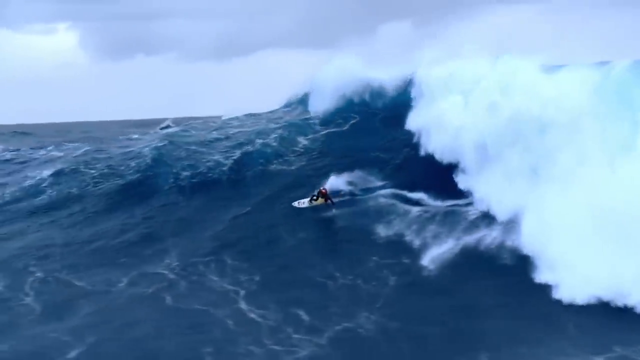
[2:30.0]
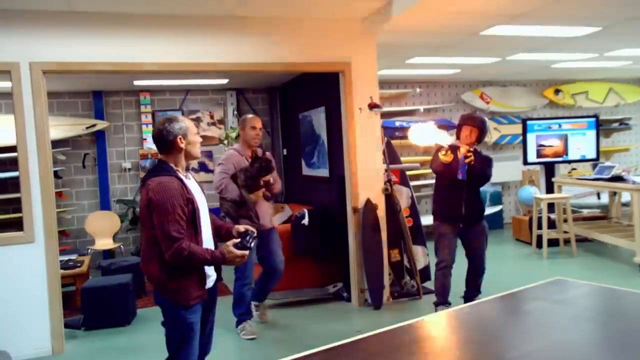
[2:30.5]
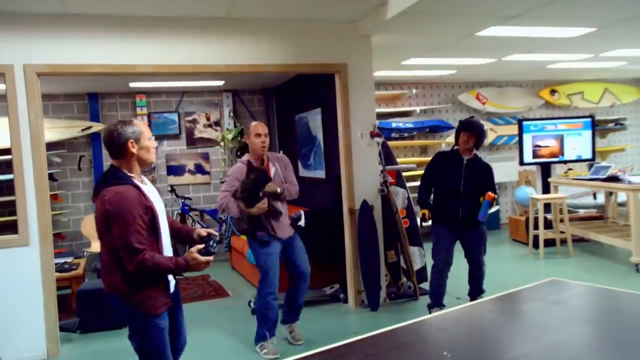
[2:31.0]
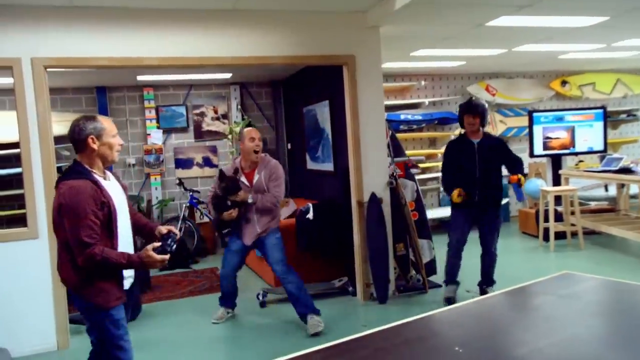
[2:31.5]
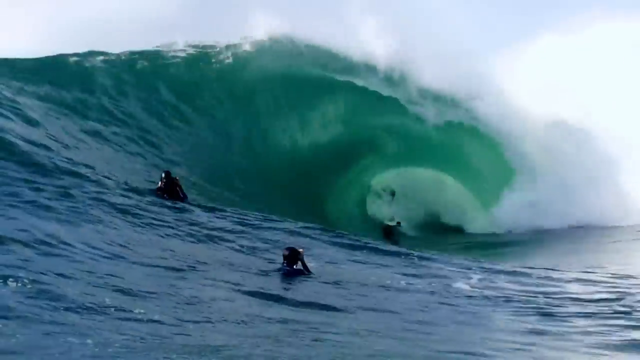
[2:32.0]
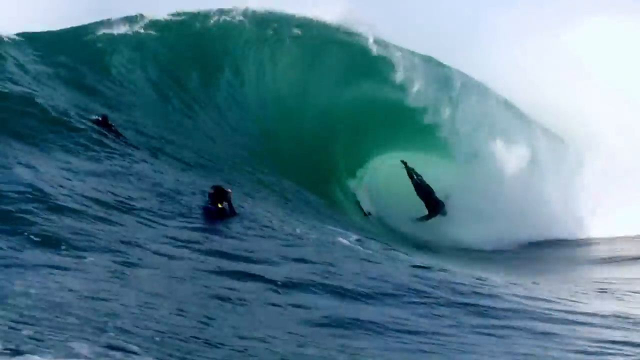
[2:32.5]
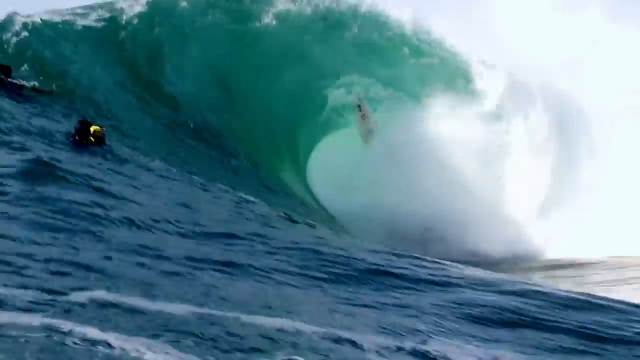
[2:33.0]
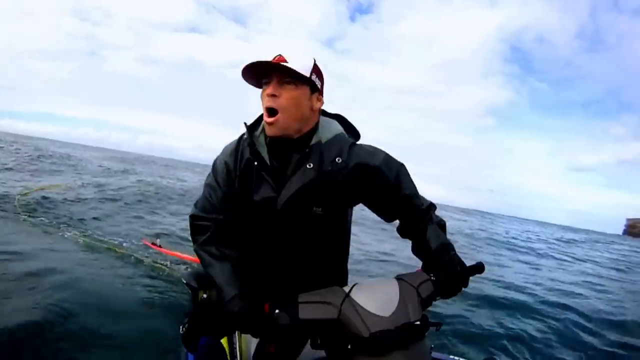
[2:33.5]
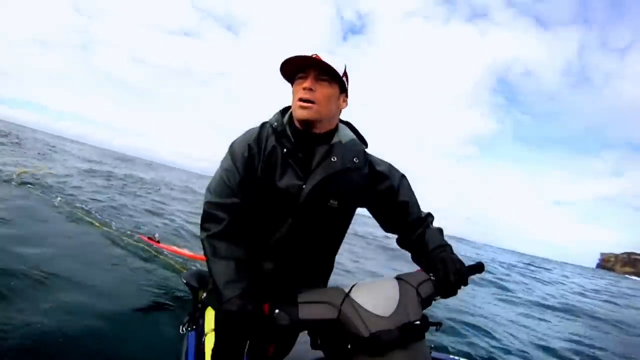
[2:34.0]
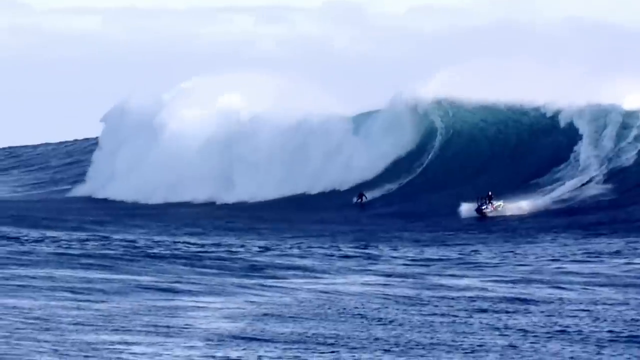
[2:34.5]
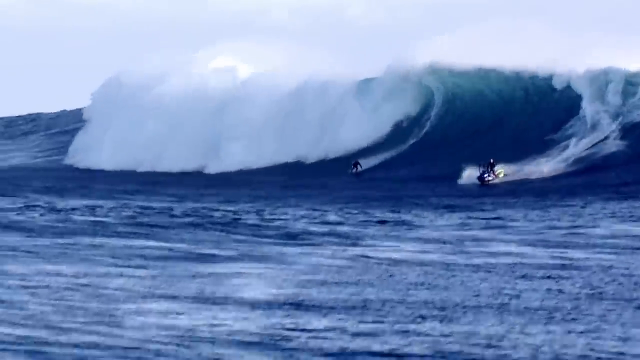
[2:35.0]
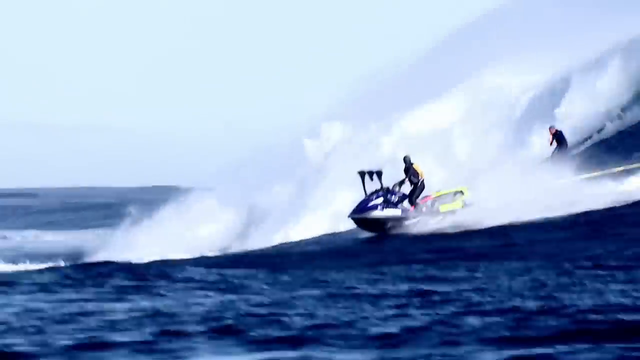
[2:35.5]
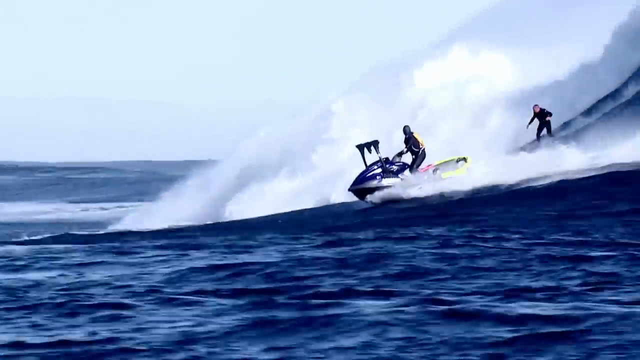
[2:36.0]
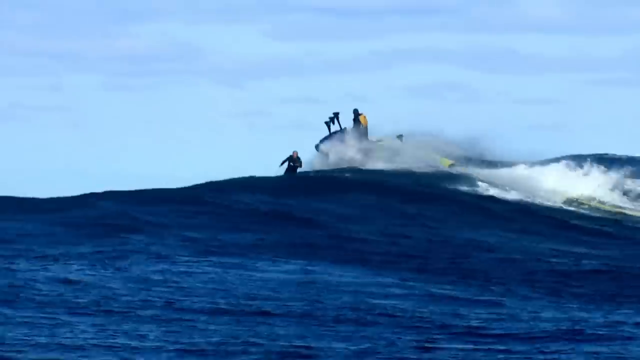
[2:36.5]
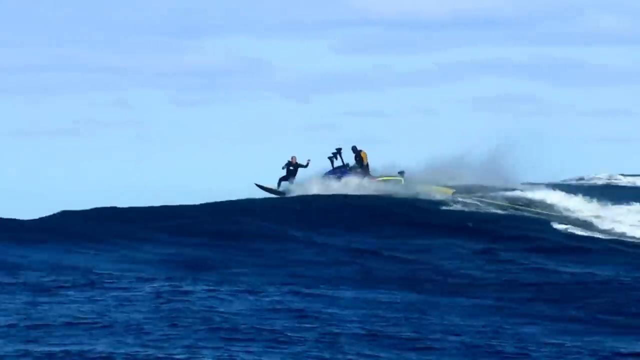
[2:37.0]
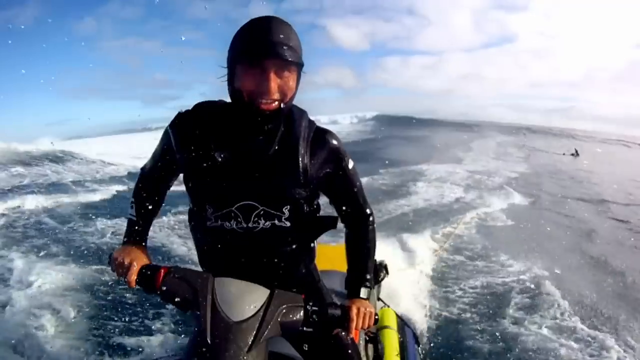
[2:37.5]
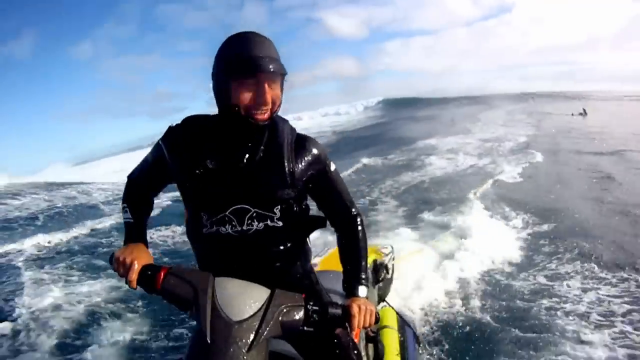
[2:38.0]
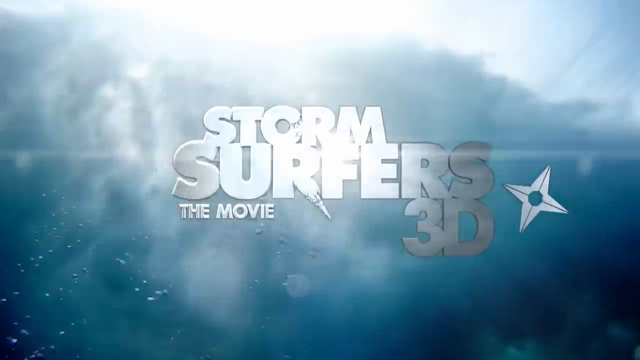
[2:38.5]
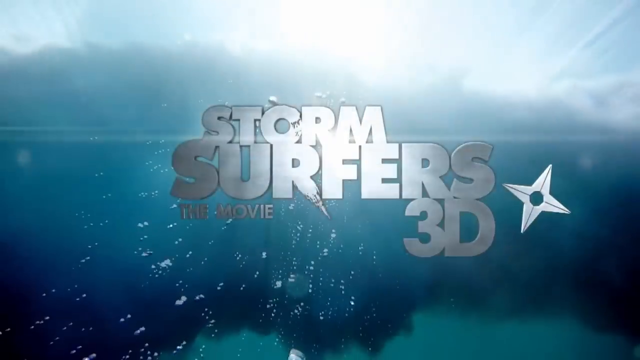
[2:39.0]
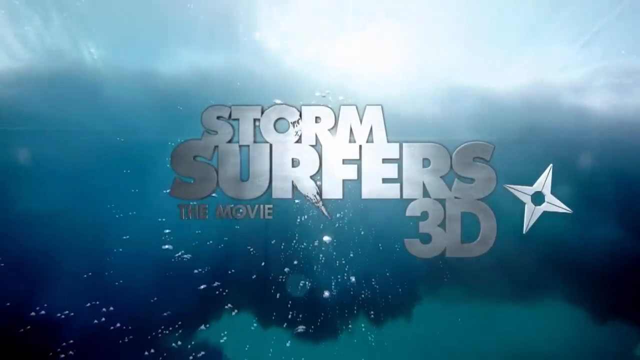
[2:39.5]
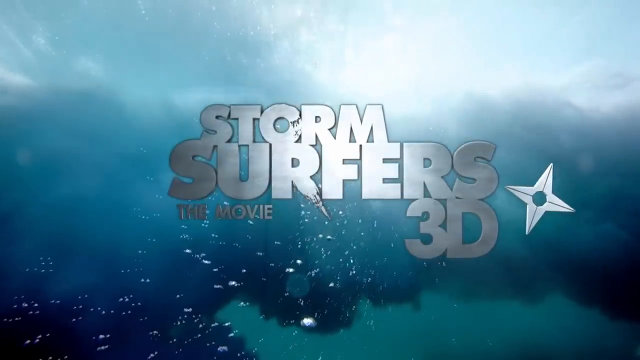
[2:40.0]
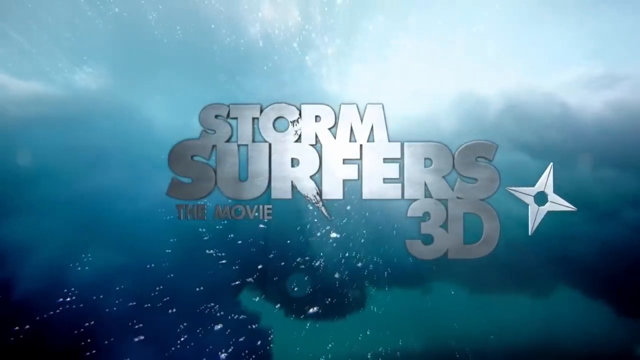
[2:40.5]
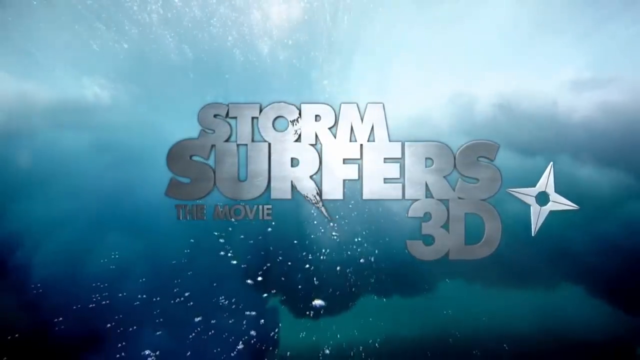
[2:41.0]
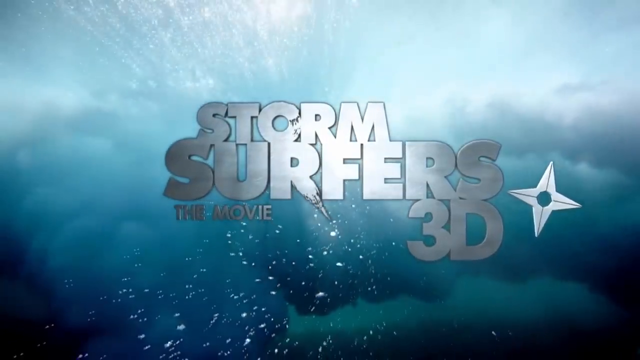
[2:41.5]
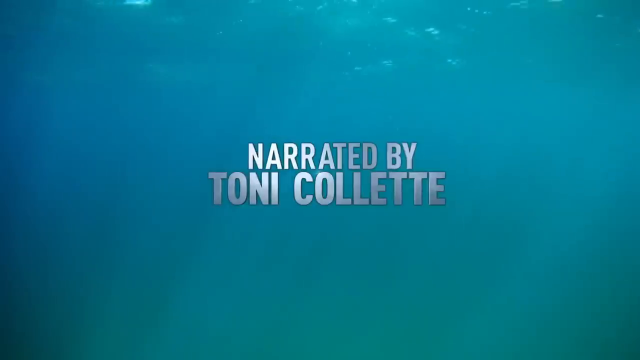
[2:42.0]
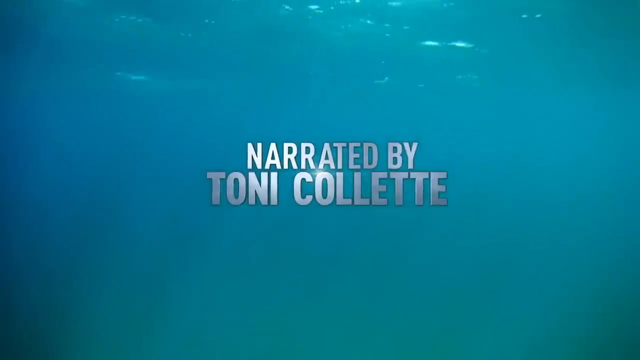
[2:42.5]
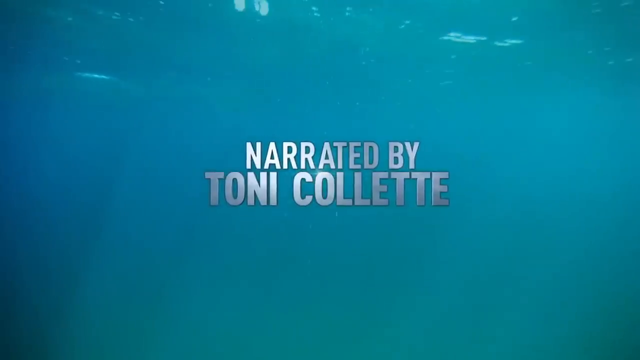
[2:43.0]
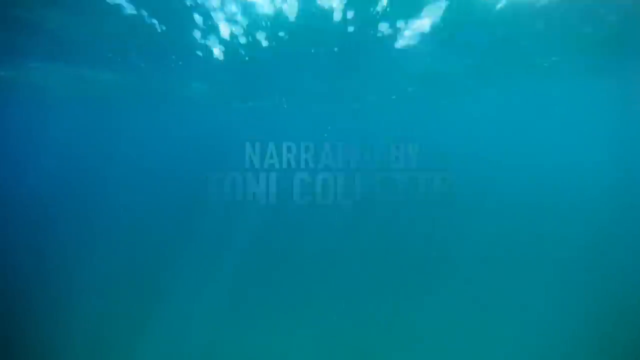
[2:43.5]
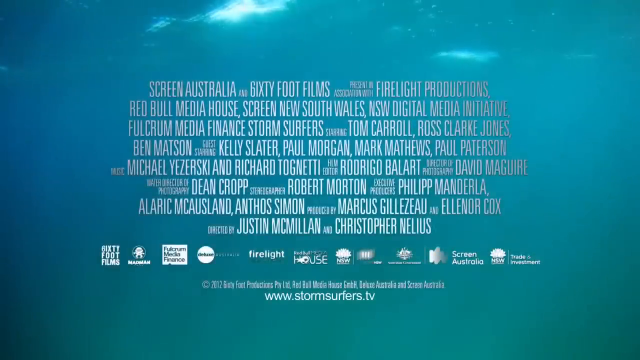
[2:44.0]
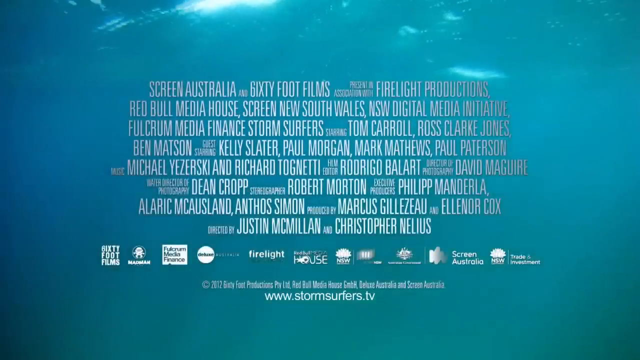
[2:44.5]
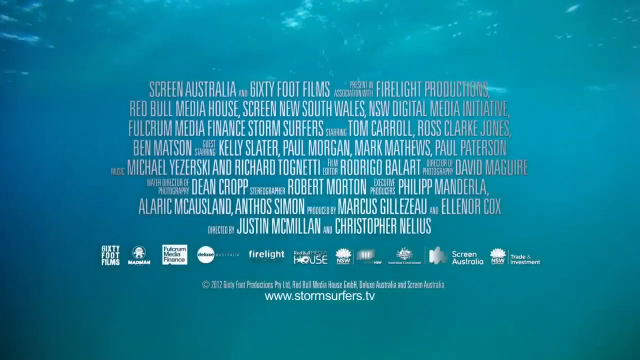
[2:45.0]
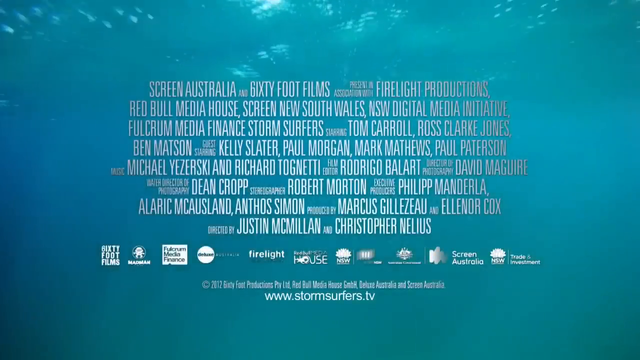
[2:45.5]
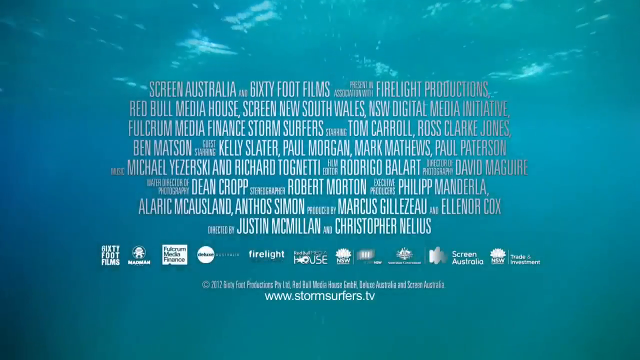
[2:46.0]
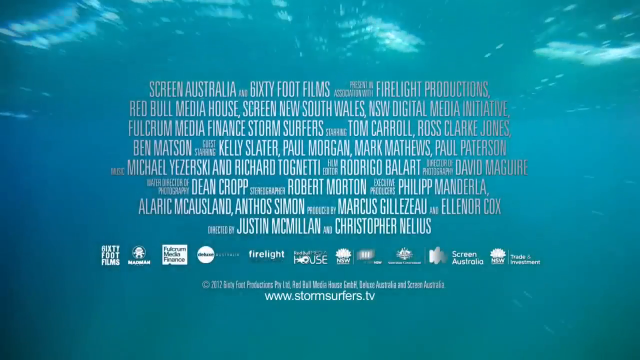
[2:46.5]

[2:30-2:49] A number of people surf in different directions. Then a large crowd is shown. Various logos appear at the bottom of the screen in different colors, with white text over the background. Someone is in the water.